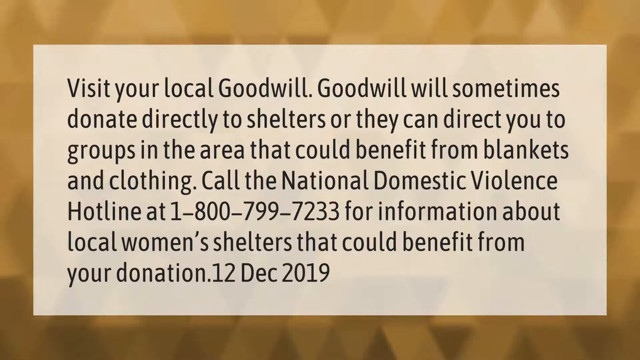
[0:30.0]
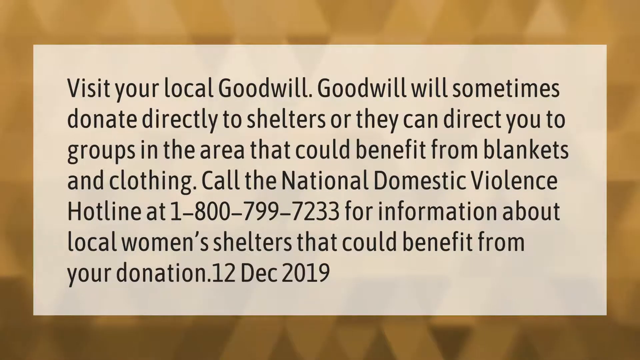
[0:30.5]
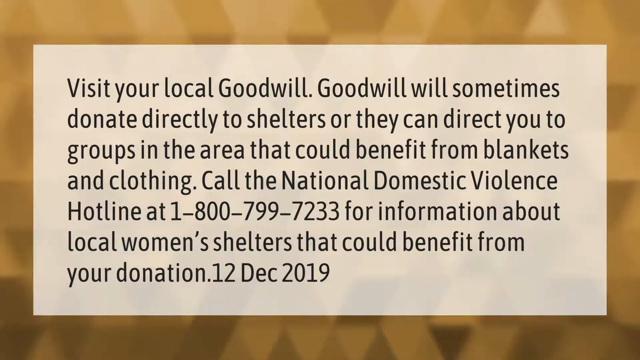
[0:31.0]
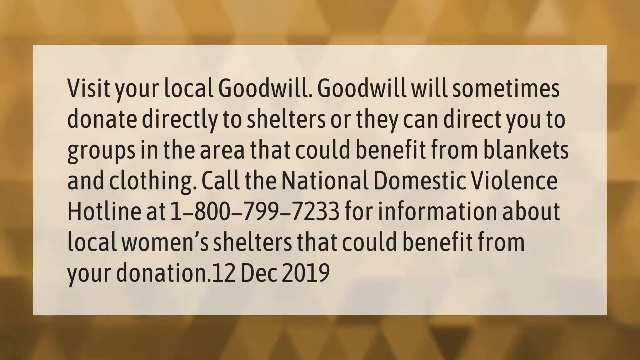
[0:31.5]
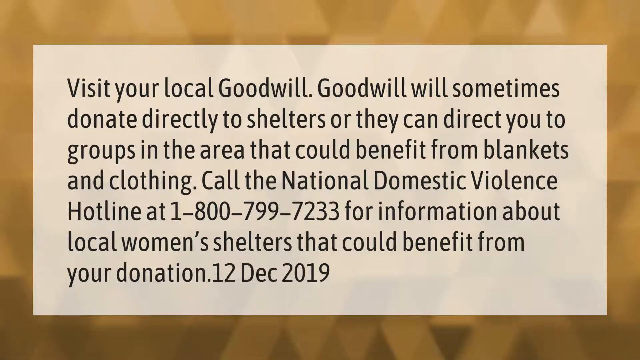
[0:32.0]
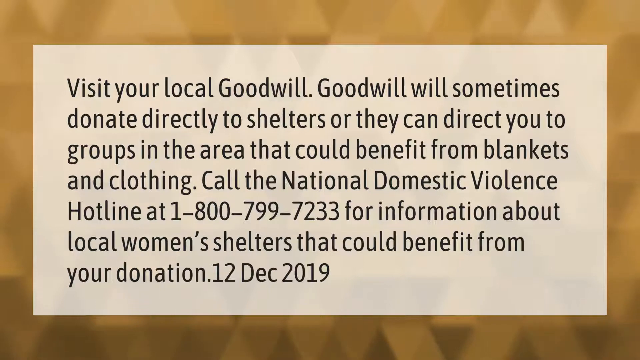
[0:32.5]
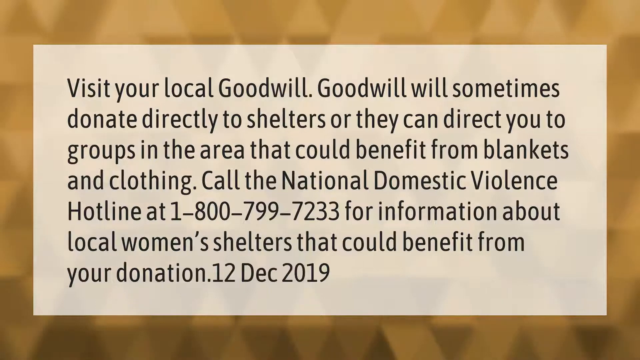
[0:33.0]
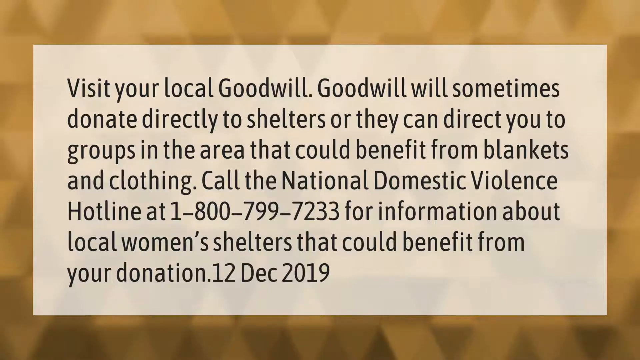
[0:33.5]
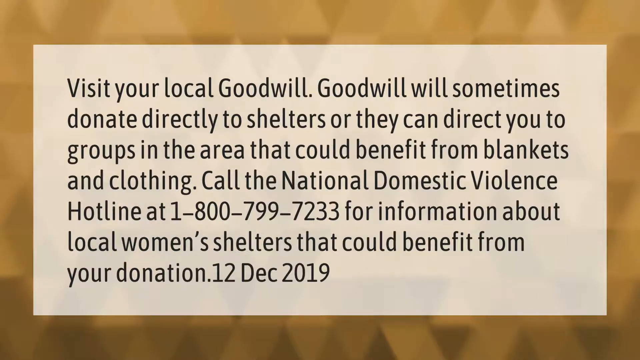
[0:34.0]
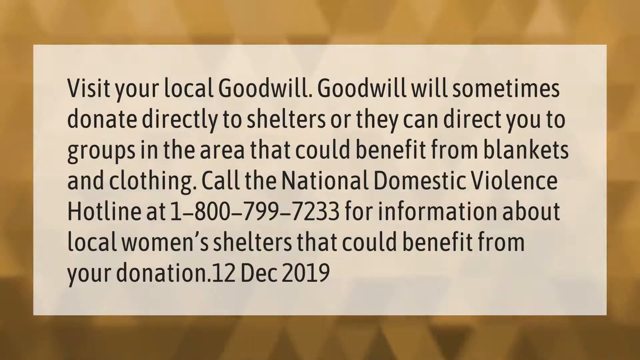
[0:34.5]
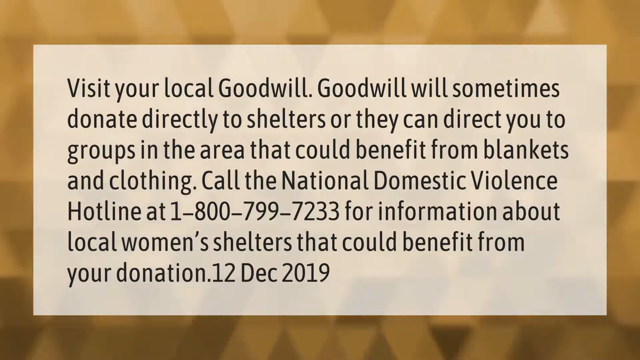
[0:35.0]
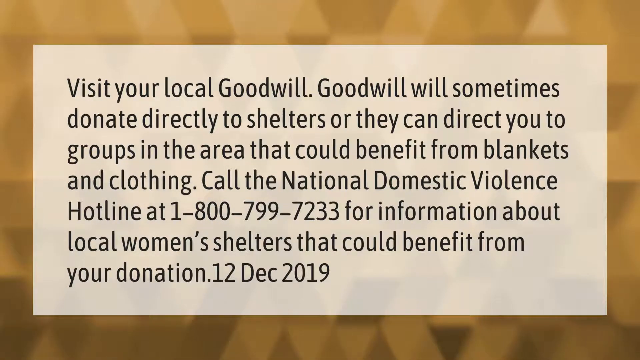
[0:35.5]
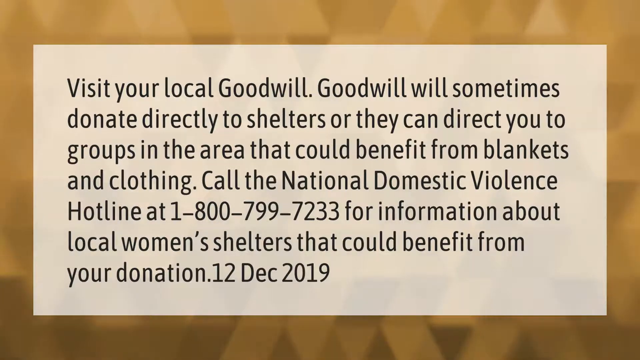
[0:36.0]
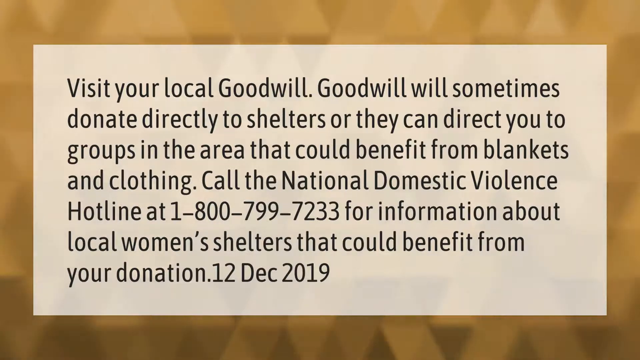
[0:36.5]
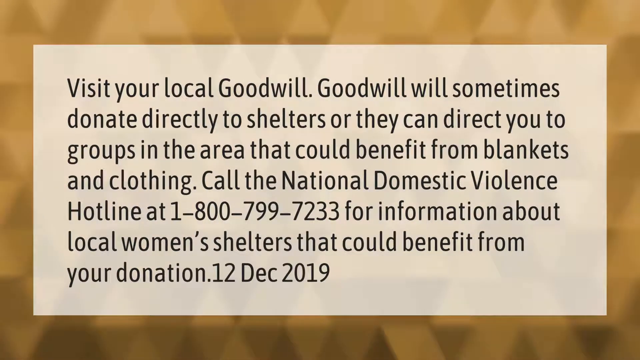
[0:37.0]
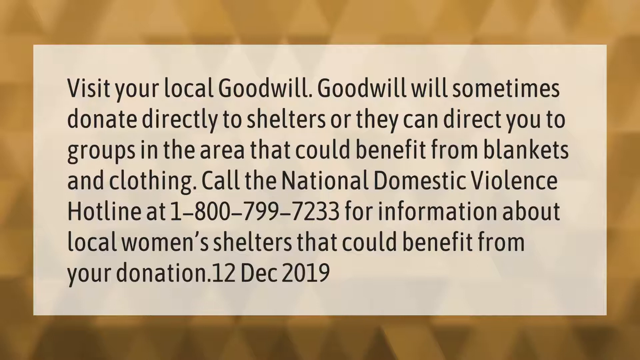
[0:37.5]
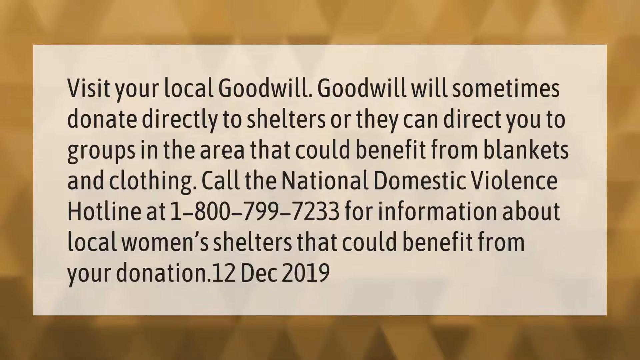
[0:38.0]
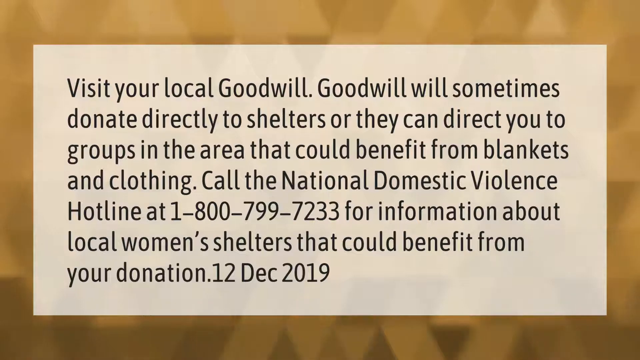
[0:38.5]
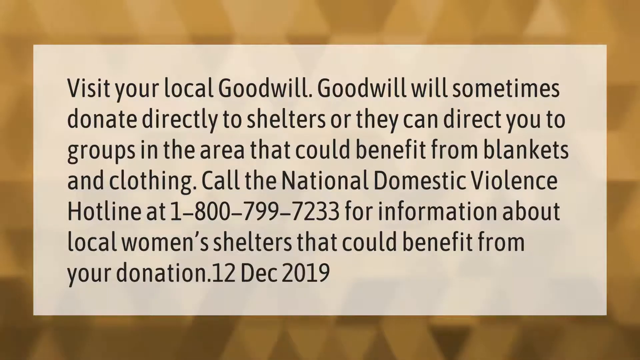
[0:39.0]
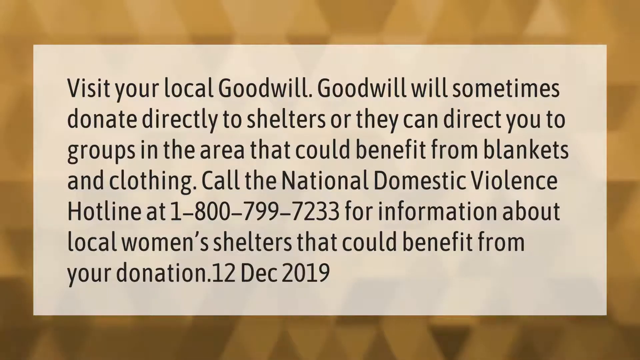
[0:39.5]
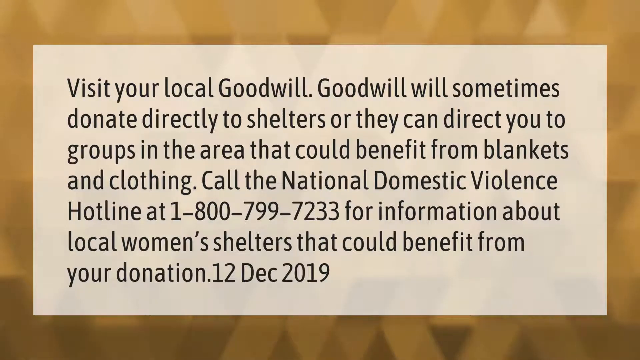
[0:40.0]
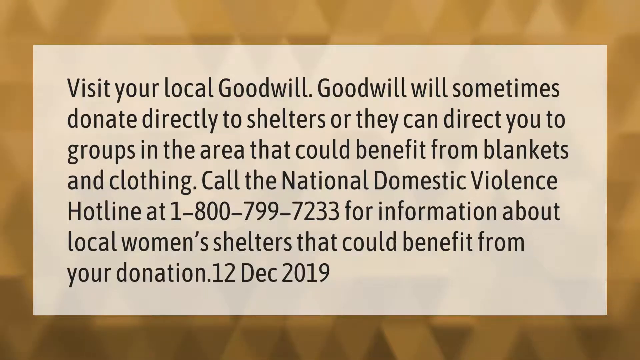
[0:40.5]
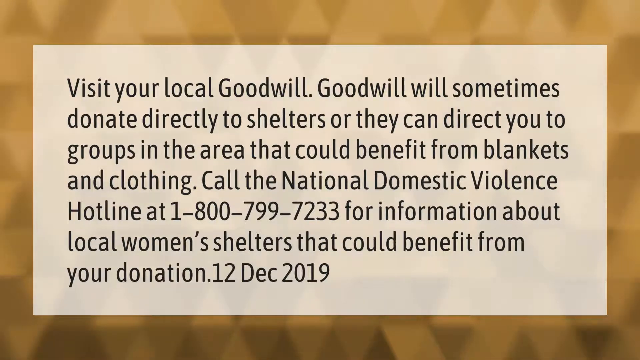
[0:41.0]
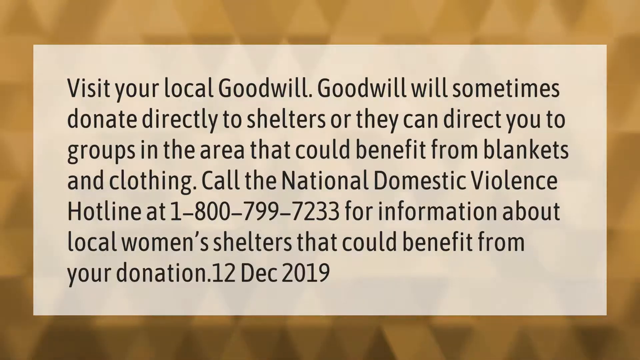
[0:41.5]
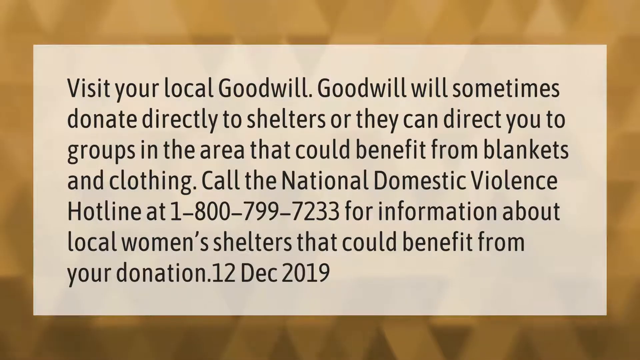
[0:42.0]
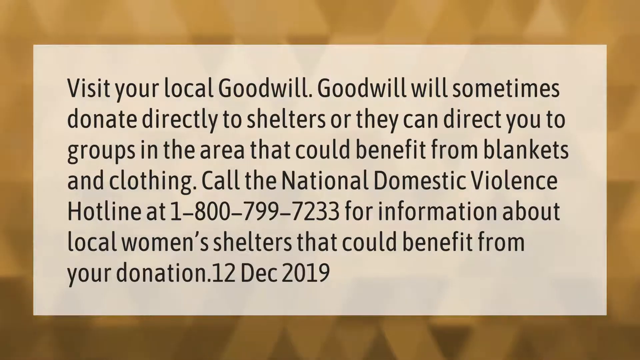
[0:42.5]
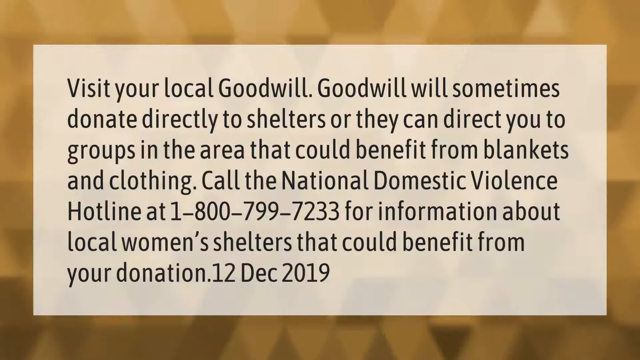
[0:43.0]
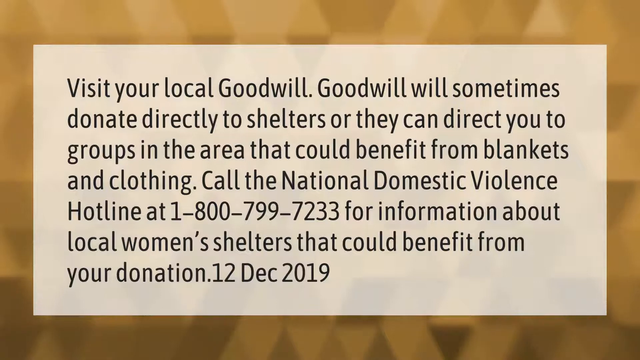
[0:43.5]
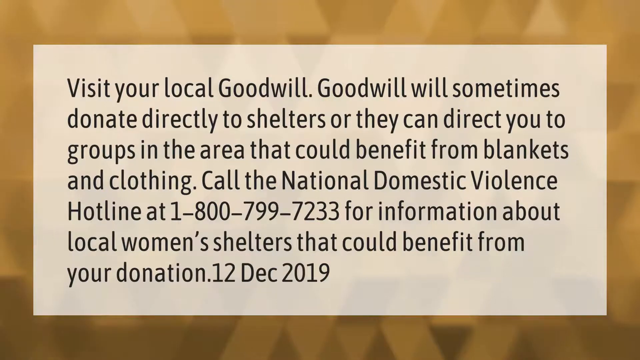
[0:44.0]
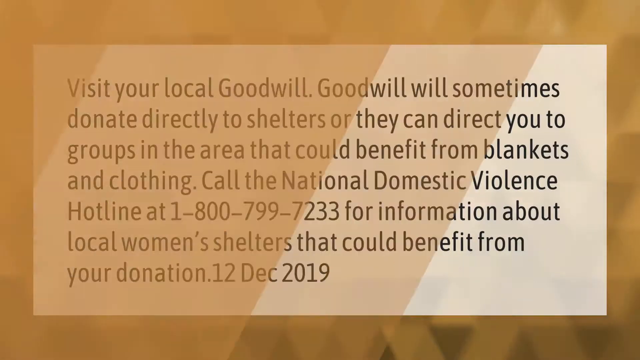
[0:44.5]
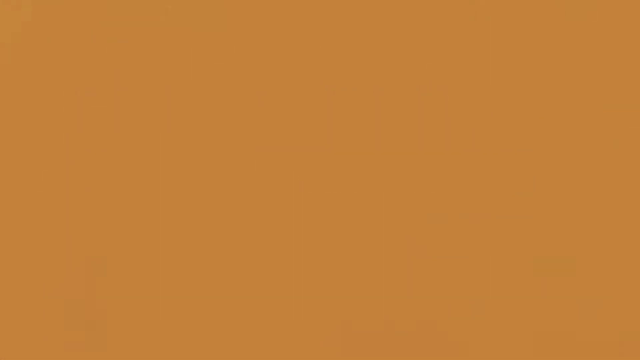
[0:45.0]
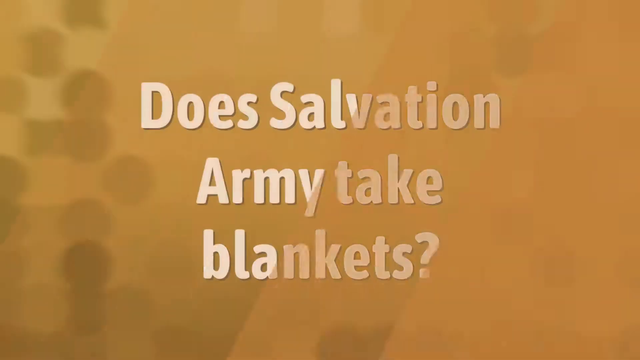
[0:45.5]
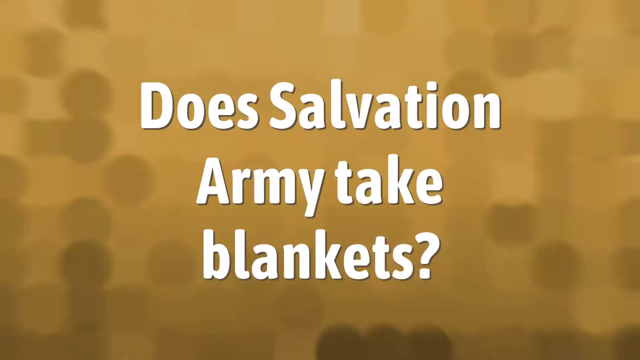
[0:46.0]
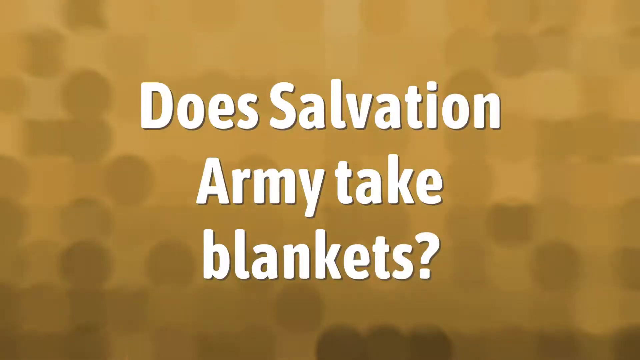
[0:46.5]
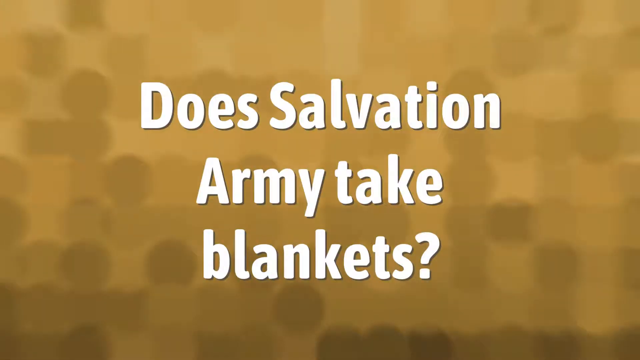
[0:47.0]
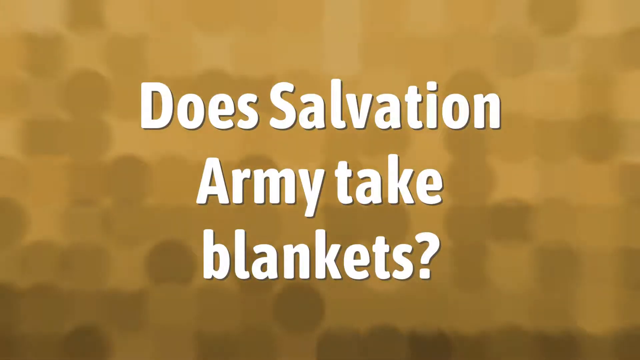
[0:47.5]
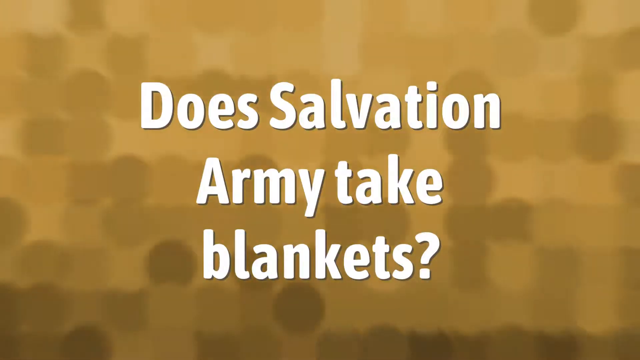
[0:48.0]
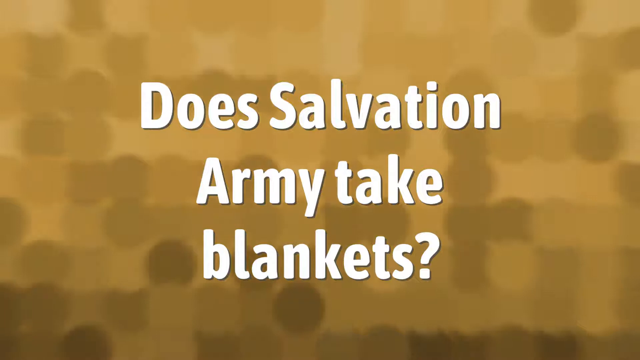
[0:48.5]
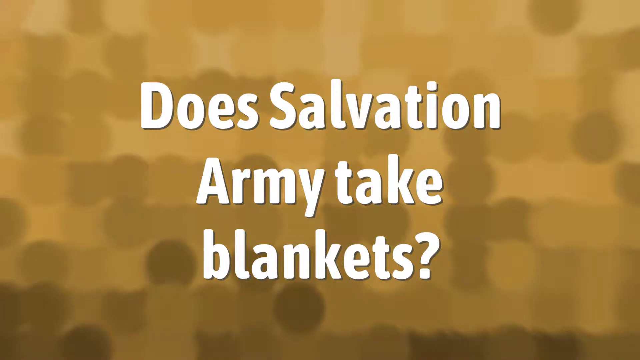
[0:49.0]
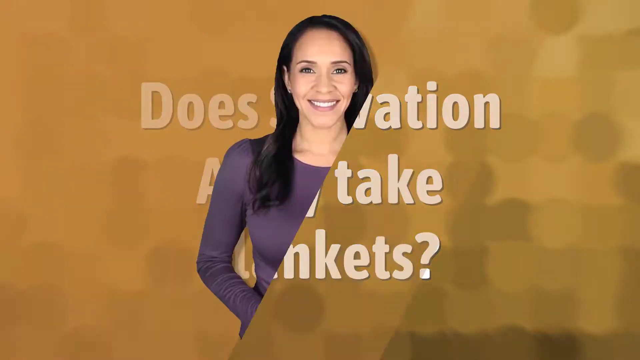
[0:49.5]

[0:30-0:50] Text continues about the local Goodwill and calling the National Domestic Violence hotline to find out where to donate. Text then reads "does Salvation Army take blankets?" The background is a beige, tan-brown color, with white or black words on it, and the woman is shown talking.